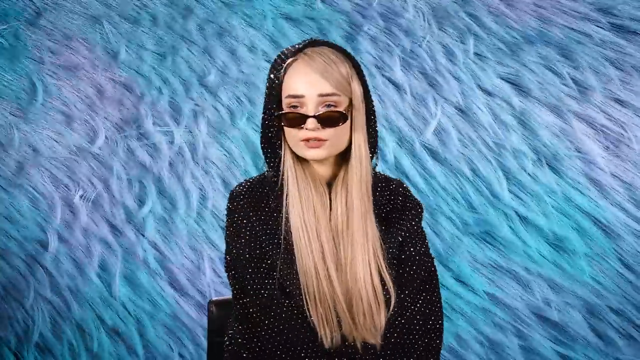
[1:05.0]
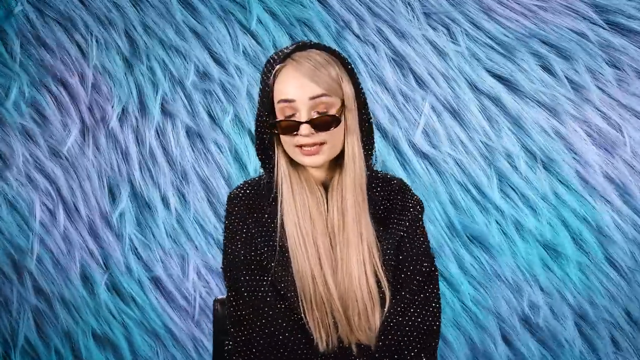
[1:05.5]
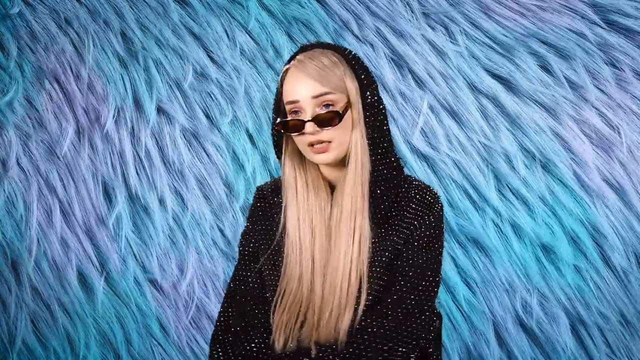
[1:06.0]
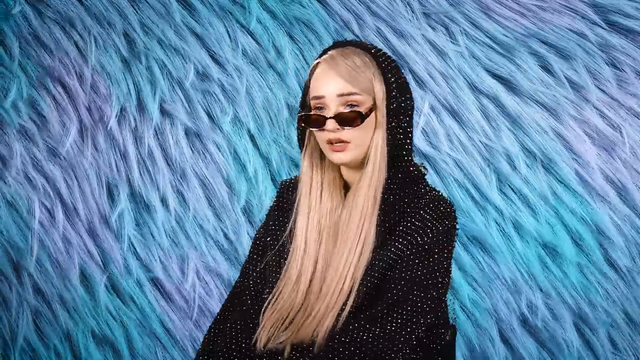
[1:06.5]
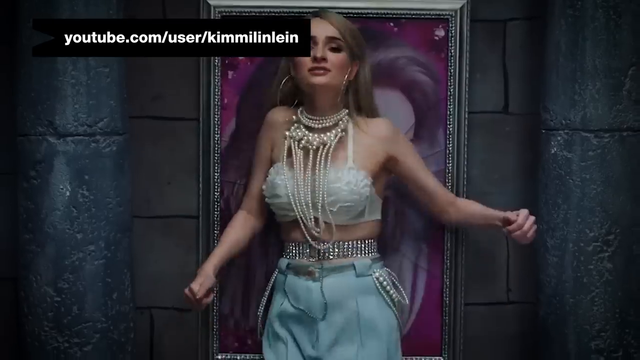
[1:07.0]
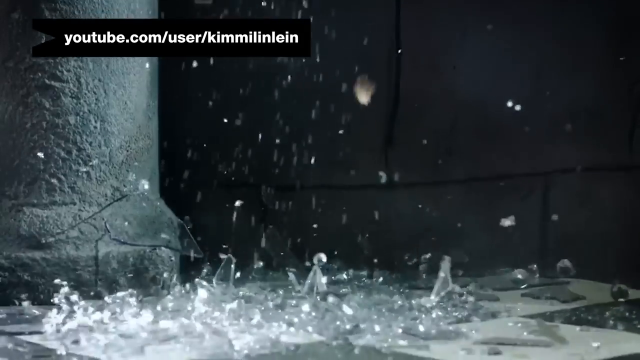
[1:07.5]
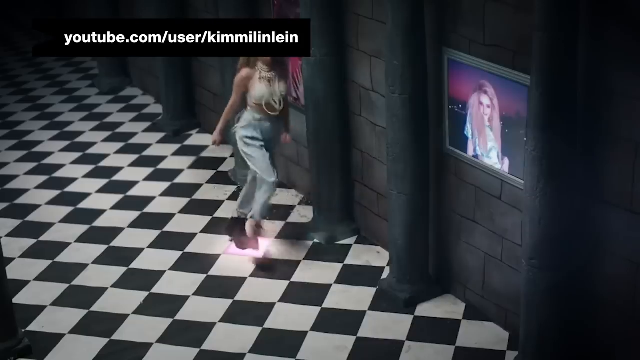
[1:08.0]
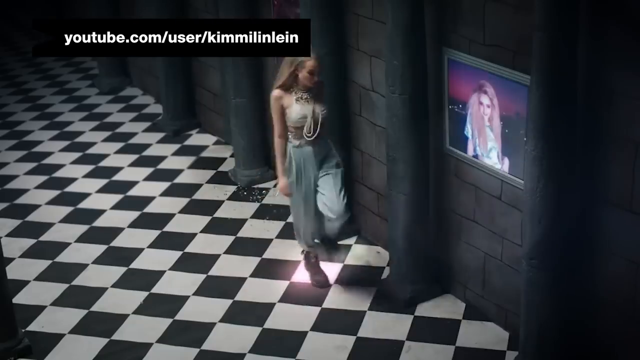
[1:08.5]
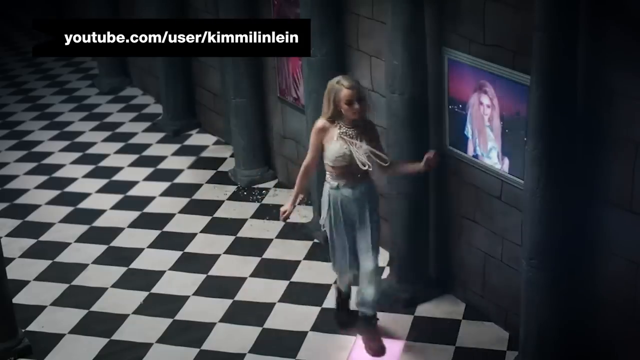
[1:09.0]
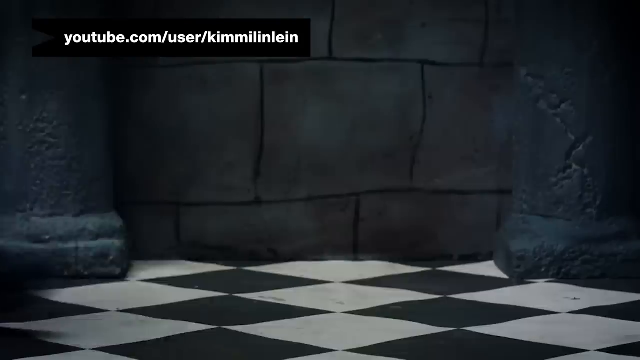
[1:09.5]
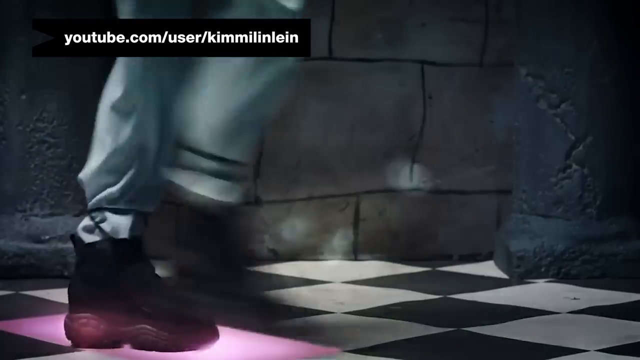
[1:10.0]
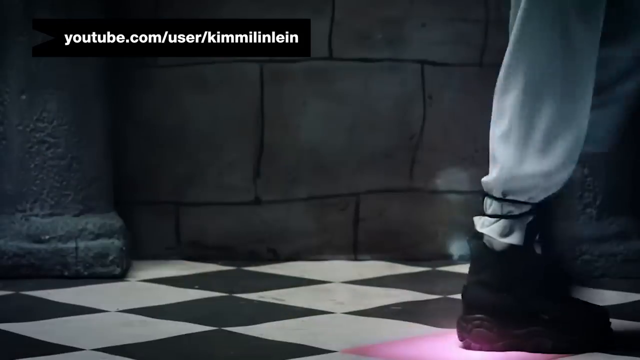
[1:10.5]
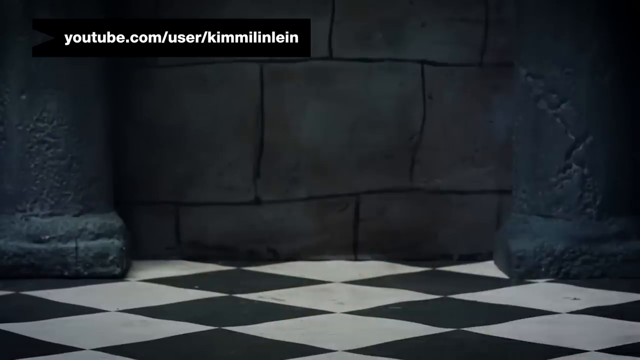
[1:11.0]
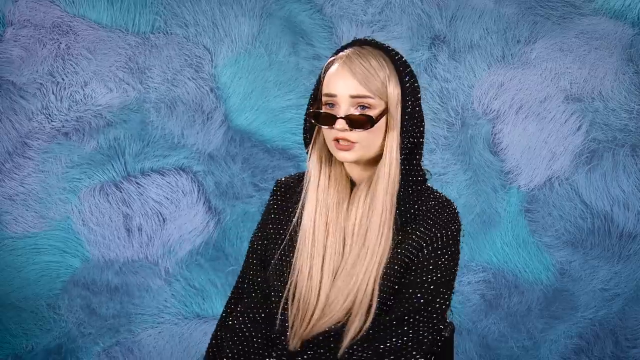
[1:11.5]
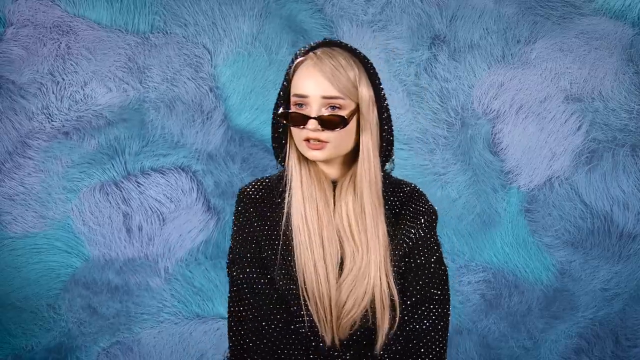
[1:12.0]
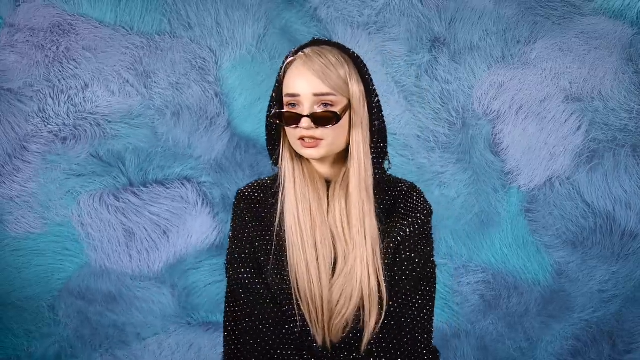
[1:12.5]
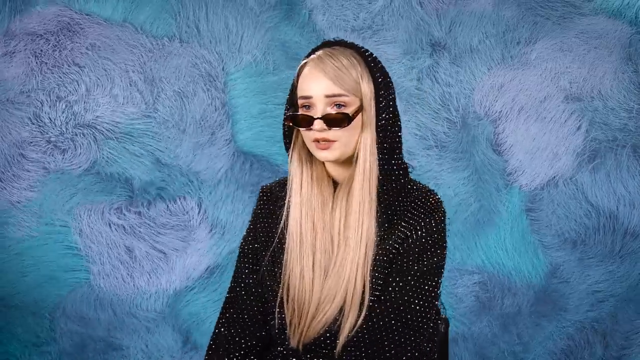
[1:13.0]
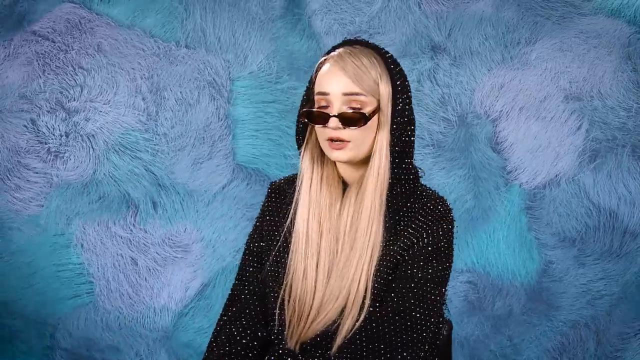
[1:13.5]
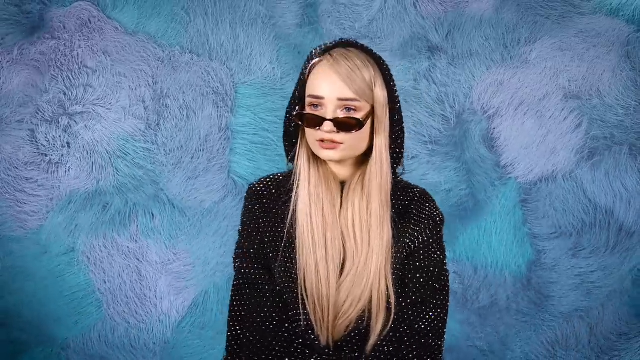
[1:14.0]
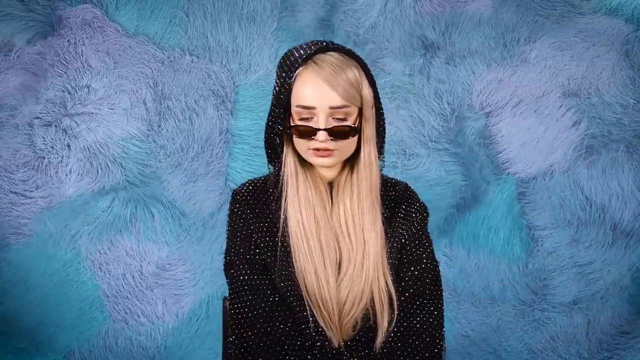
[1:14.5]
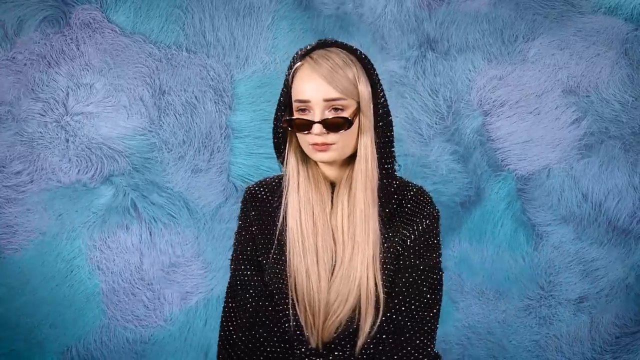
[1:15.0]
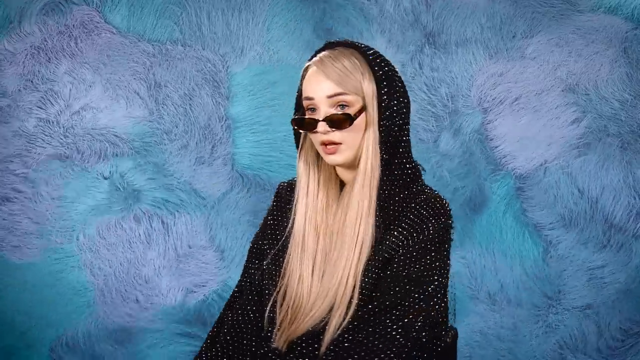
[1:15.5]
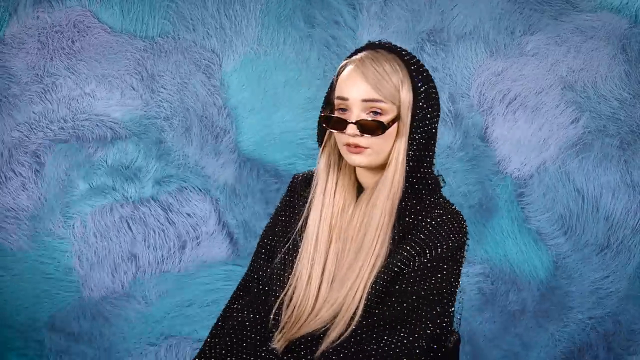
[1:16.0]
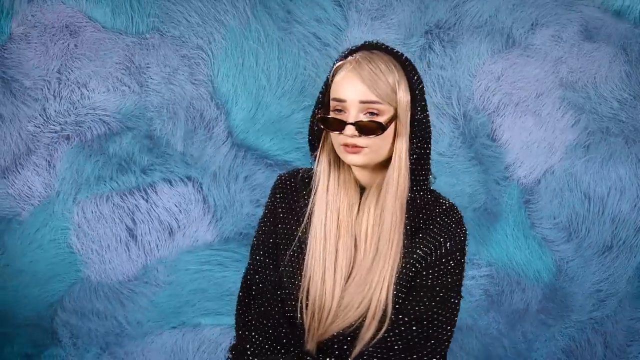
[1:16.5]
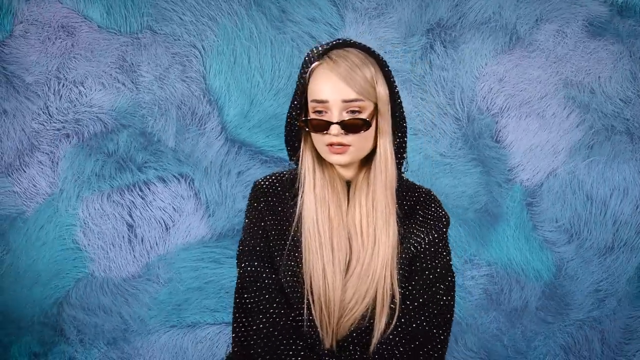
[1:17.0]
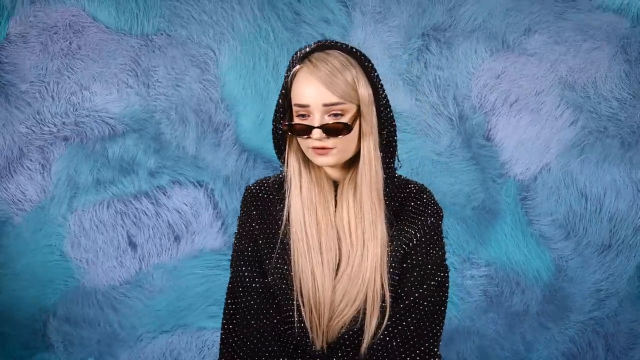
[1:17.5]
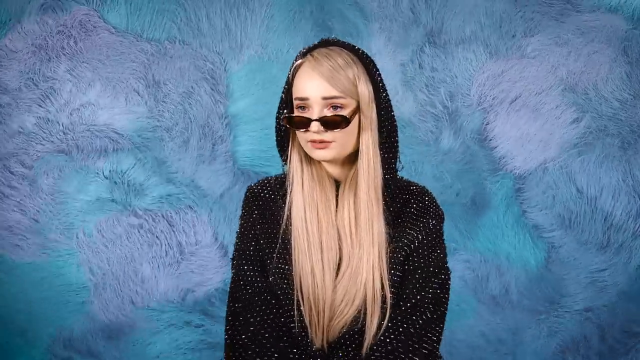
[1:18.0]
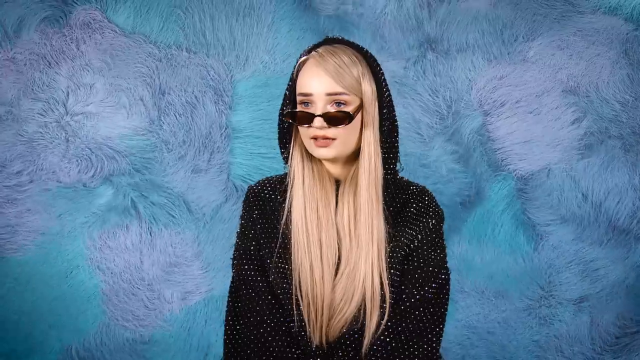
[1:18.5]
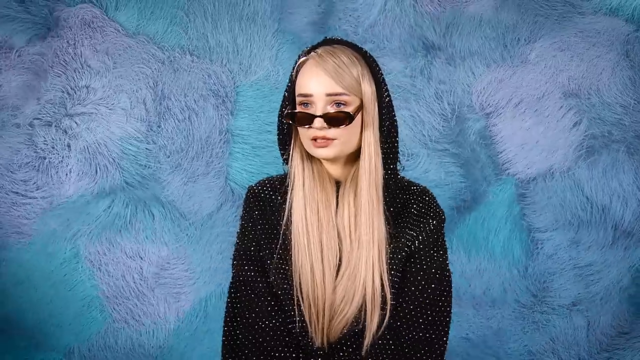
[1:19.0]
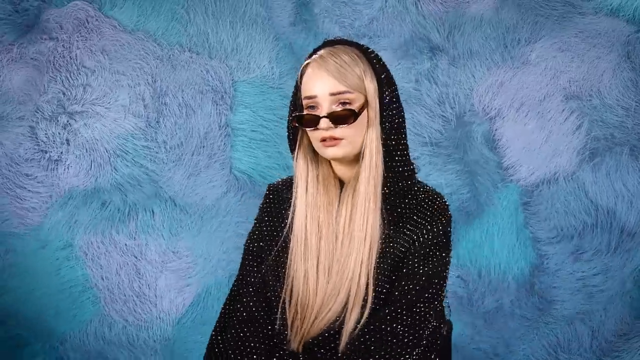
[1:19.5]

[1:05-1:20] The white-skinned person with long blonde hair sits in a chair, then it quickly changes to another clip of the same person standing in front of a wall that looks like it is made of cinder blocks or something similar. She sings and dances, wearing white pearls, a white top, light blue or gray sweatpants and black high-top shoes. She throws herself back onto the wall, where there is a photo of her, and the glass from the photo frame falls to the floor and shatters. She walks away across the black and white checkered floor, and wherever she steps, the tiles light up in a light purple-pink light. She walks, kind of almost skipping, dancing and moving her arms around.